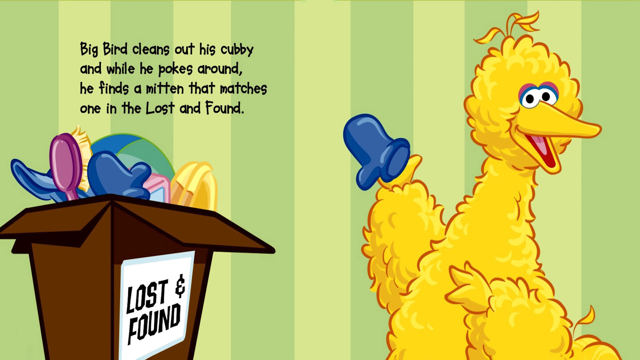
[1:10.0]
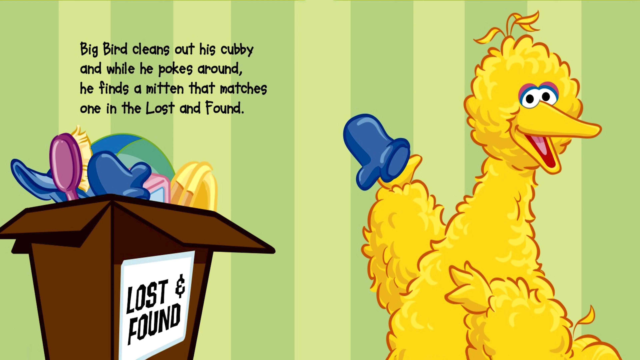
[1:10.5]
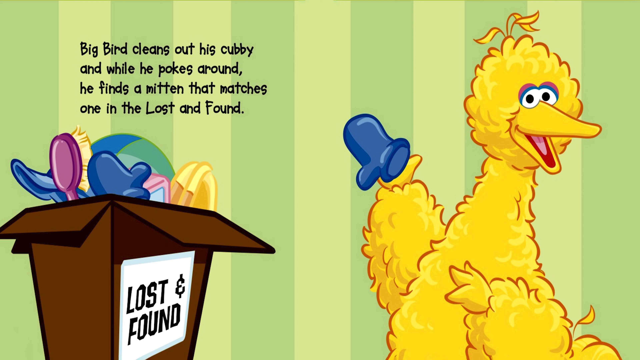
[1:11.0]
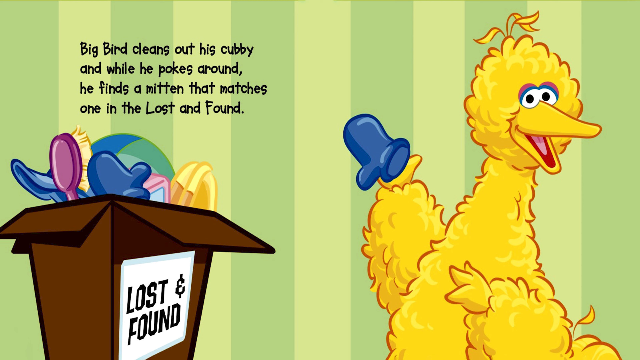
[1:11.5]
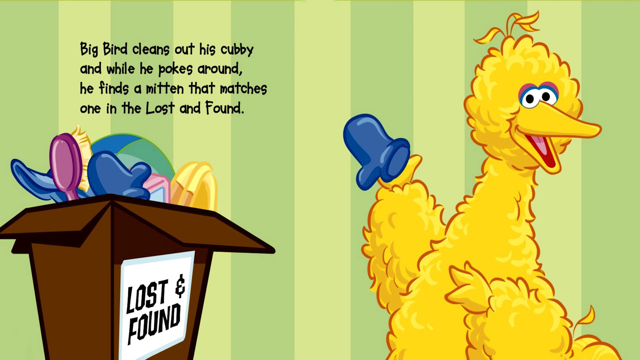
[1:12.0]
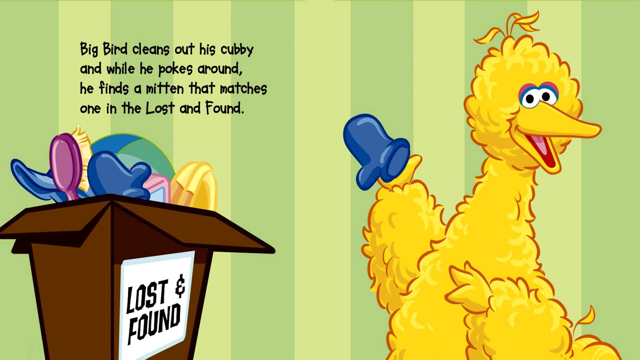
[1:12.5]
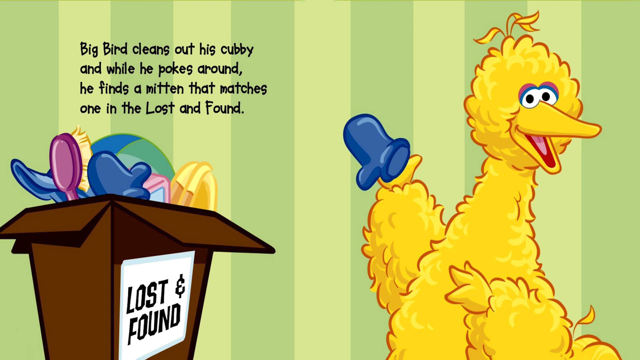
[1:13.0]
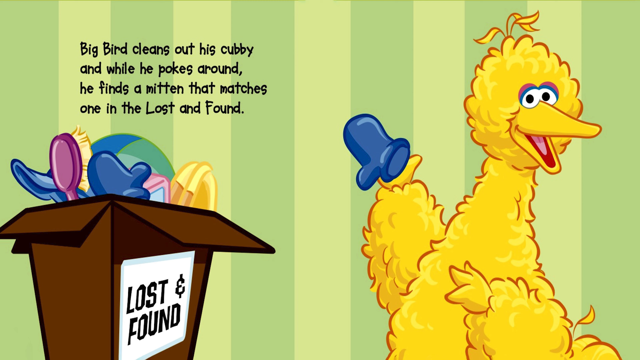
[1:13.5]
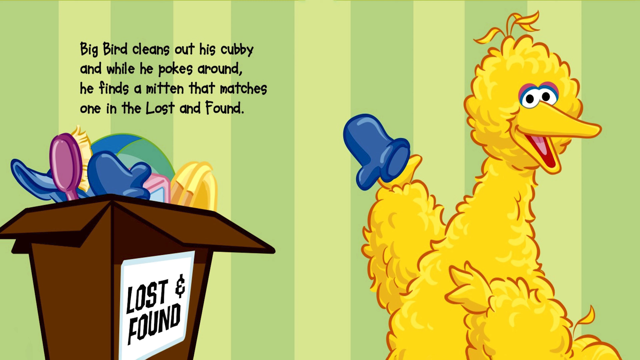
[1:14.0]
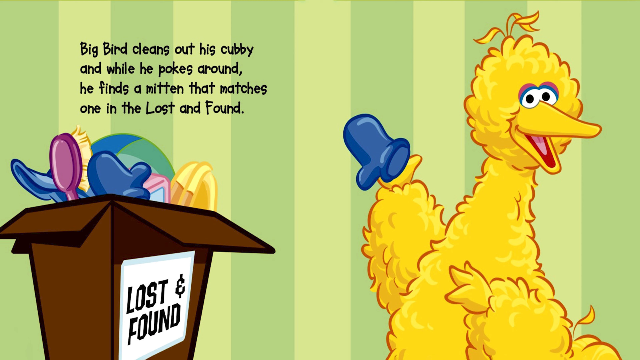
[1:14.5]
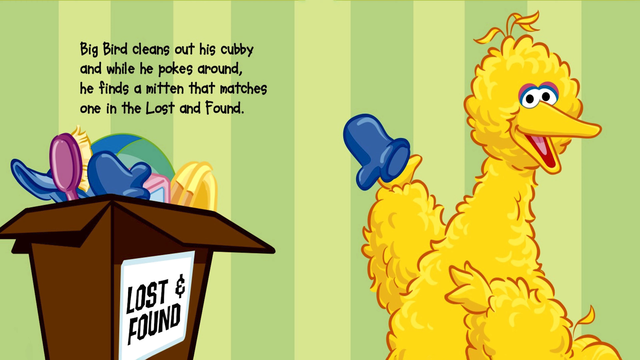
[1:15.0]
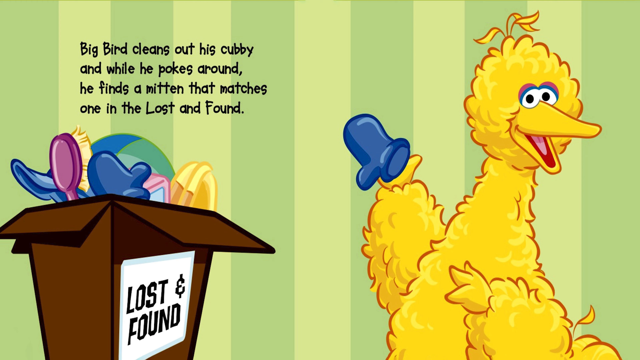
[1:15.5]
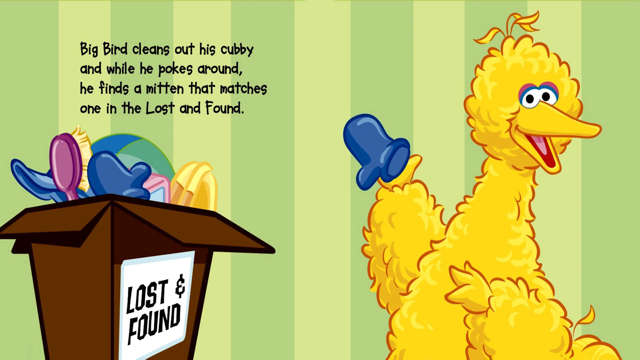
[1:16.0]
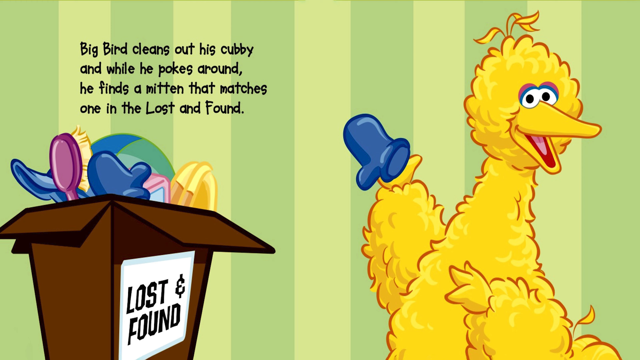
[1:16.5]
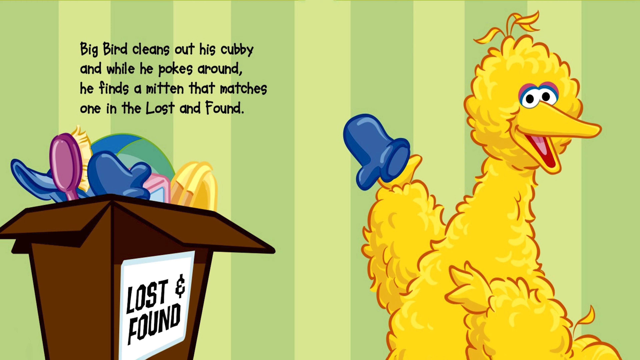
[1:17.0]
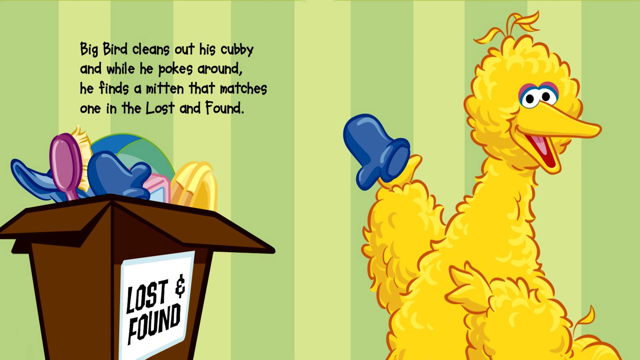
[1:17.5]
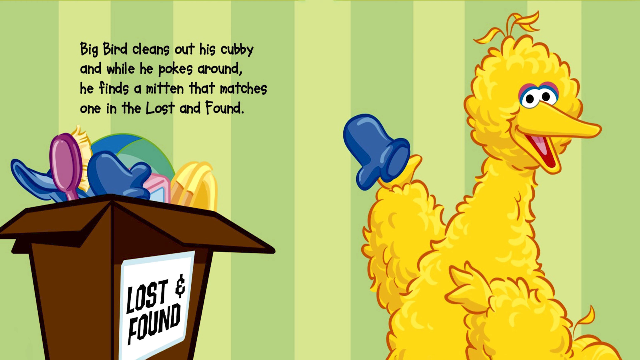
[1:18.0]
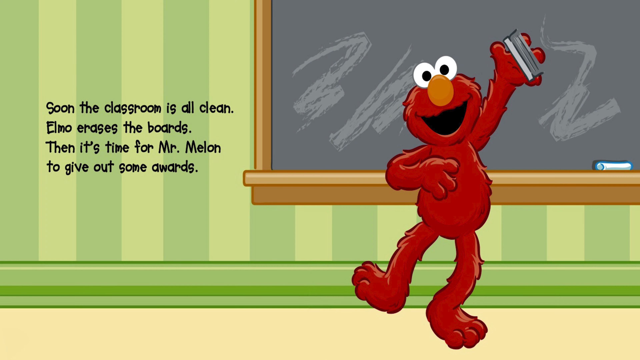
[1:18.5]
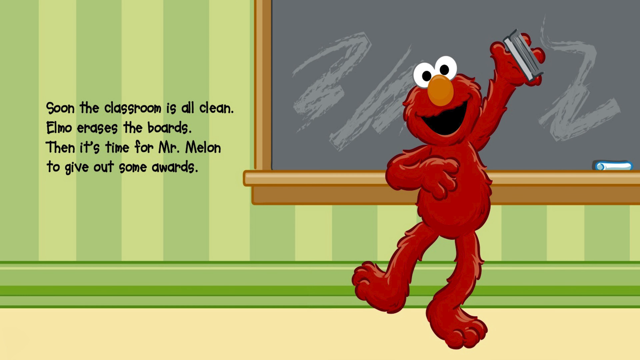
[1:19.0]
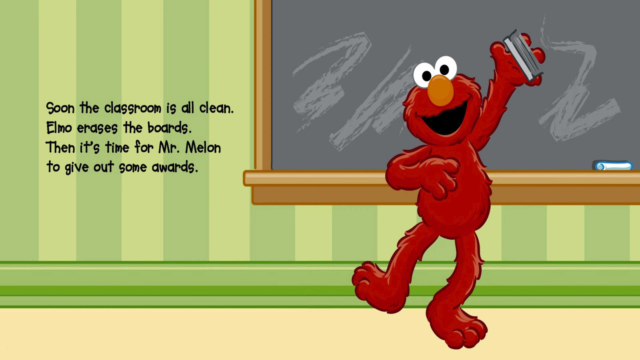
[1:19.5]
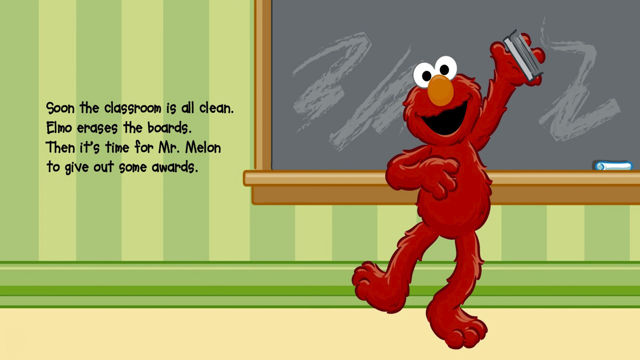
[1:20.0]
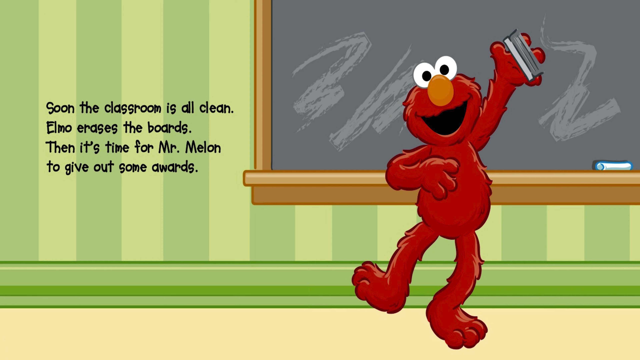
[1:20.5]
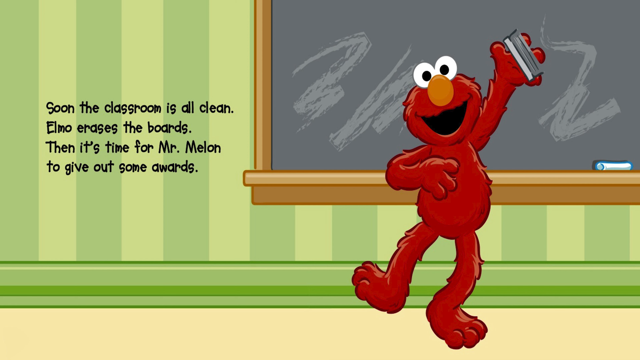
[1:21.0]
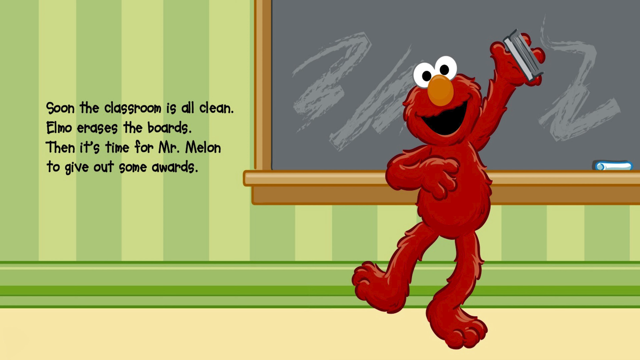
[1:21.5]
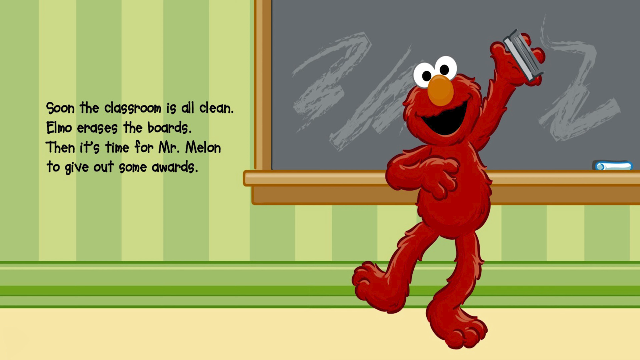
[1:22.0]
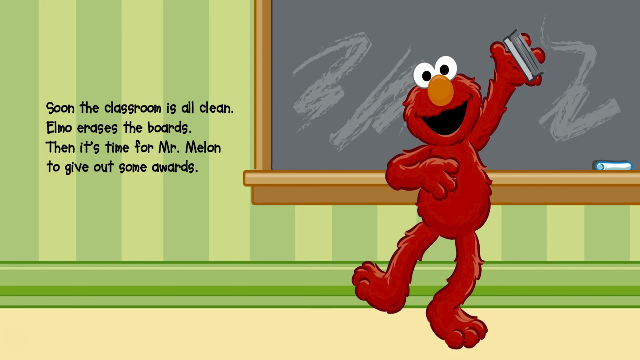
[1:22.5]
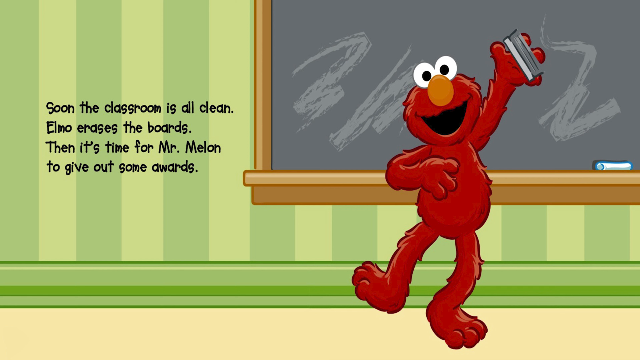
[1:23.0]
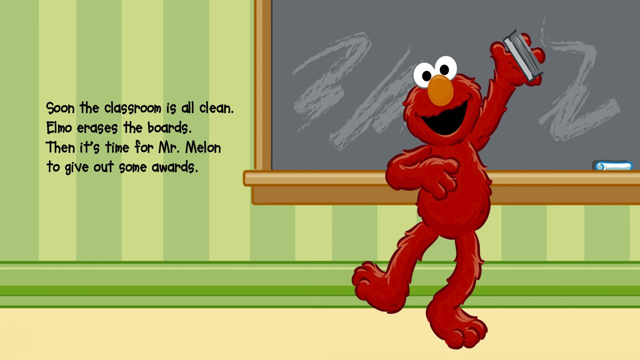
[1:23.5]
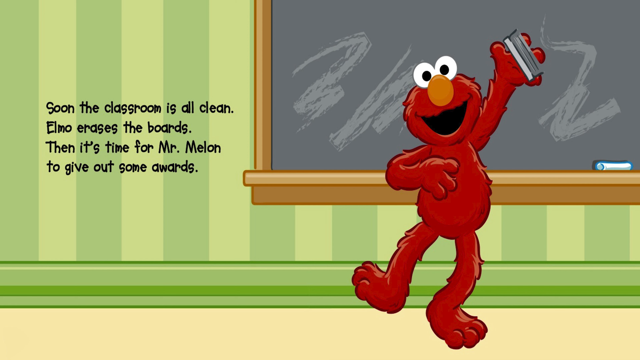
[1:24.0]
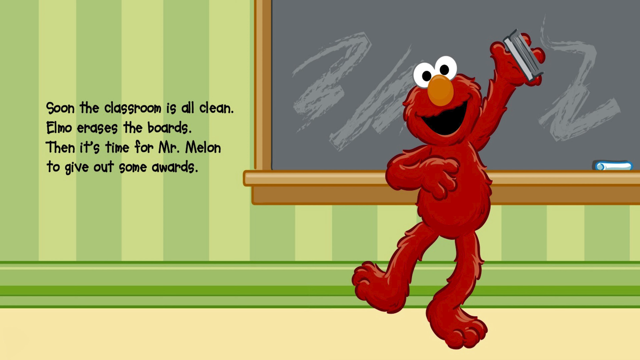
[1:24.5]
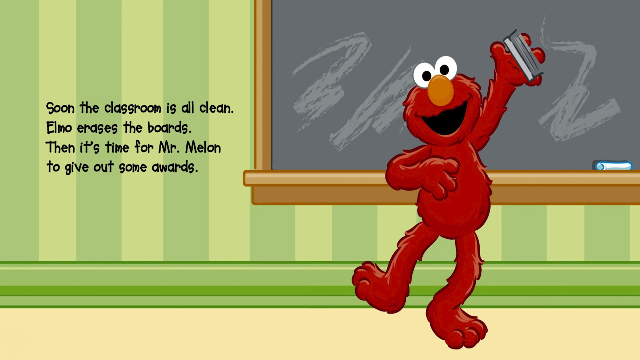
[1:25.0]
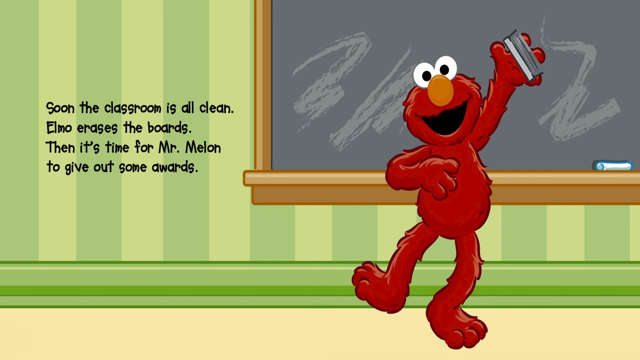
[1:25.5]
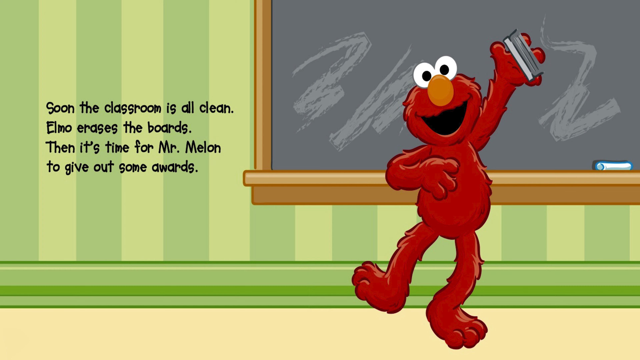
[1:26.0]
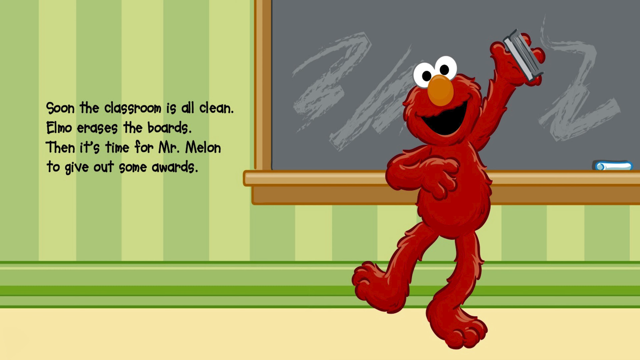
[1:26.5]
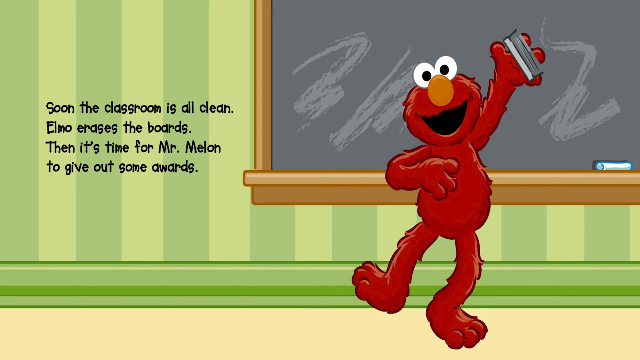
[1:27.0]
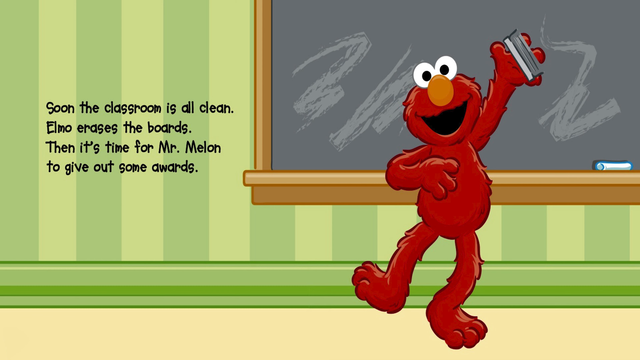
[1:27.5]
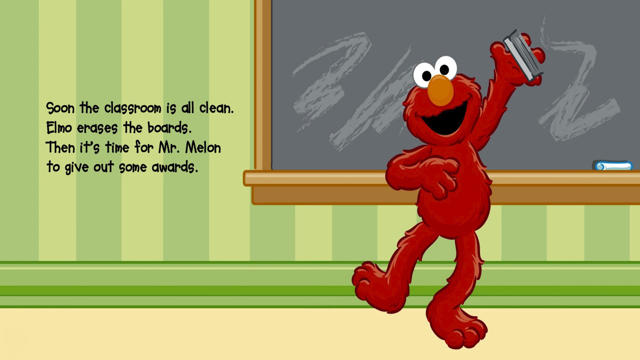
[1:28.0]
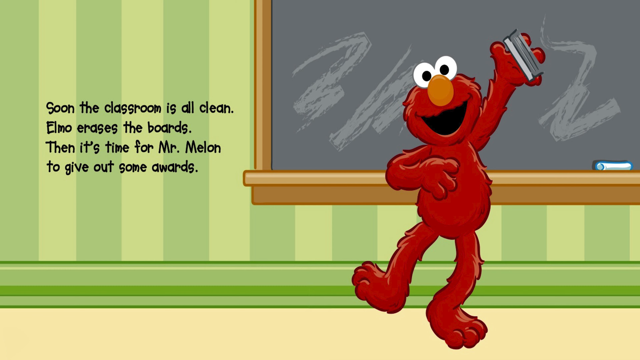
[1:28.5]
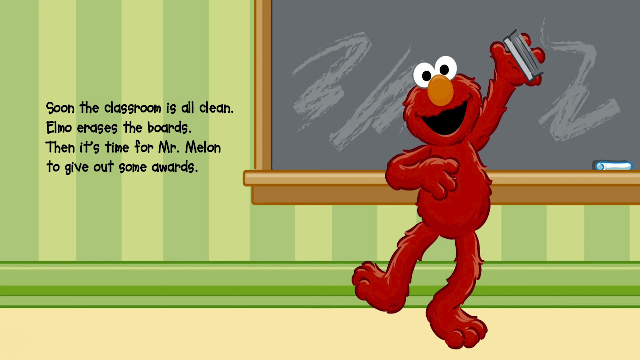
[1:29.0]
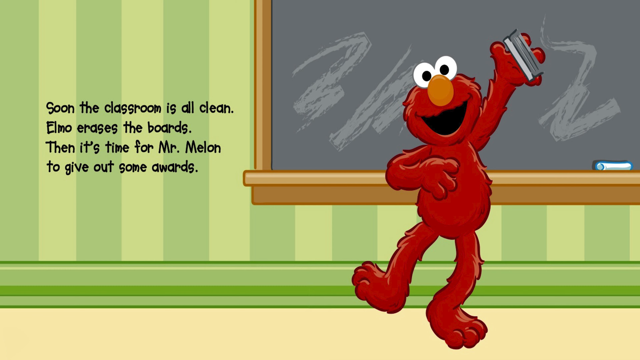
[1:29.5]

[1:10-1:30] The scene starts with Big Bird, a big yellow bird. The next slide shows Elmo, with text that begins "Soon the classroom is all clean. Elmo erases the board"; Elmo appears to be erasing the chalkboard with an eraser. The slide after that shows Big Bird, who looks very happy. Text says he is cleaning out his cubby and, while looking around, finds a mitten that matches one in the lost and found, so he has a matching pair of blue mittens. The wall behind him is two different shades of green. The whole scene is very colorful. The lost and found box that Big Bird stands beside also appears to contain a hairbrush and a ball, along with other unidentified items.